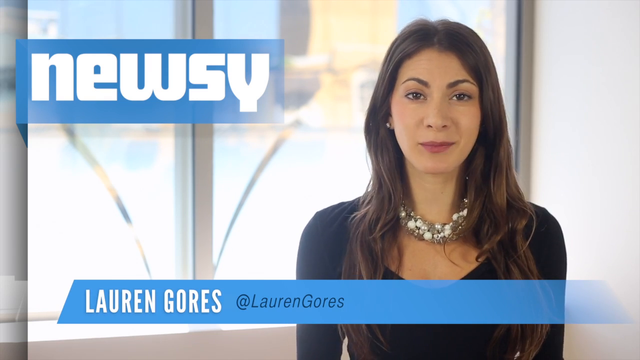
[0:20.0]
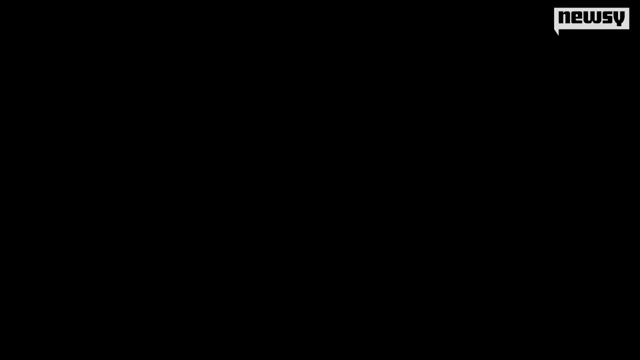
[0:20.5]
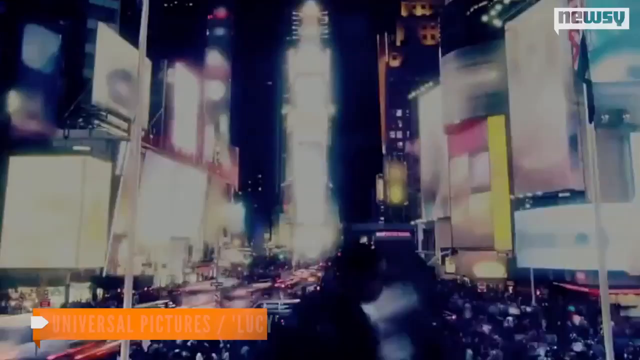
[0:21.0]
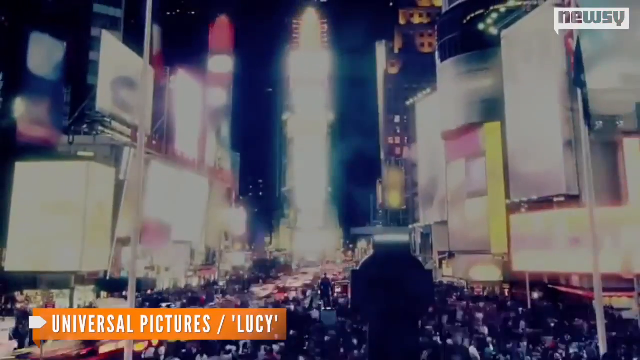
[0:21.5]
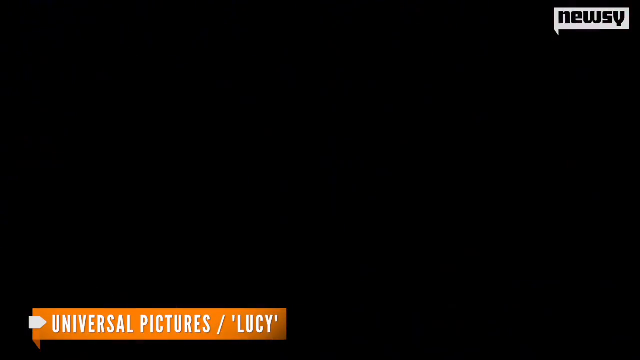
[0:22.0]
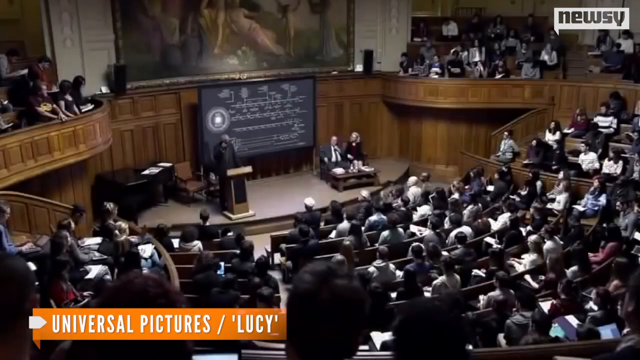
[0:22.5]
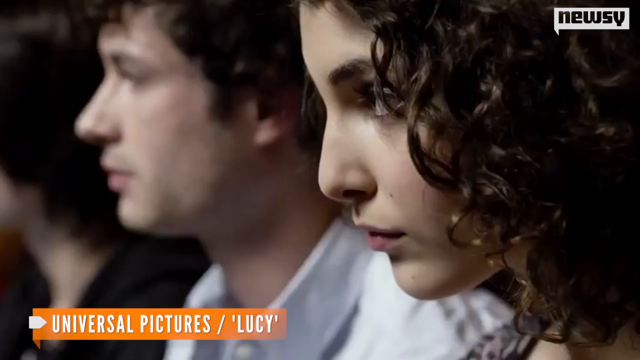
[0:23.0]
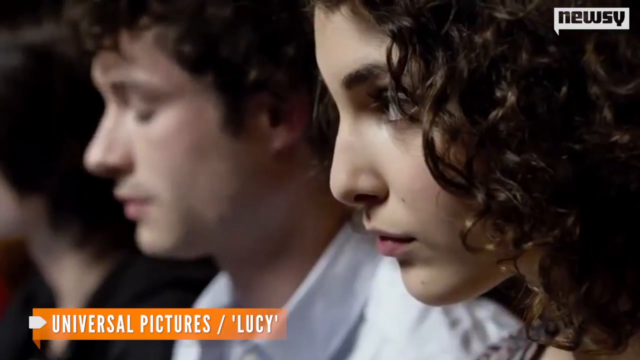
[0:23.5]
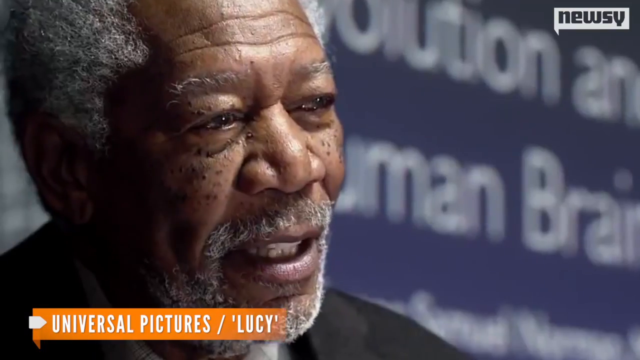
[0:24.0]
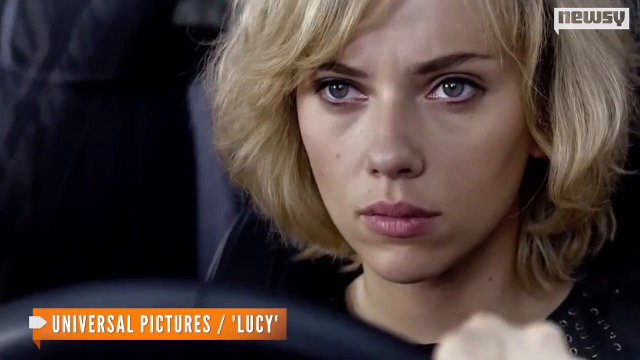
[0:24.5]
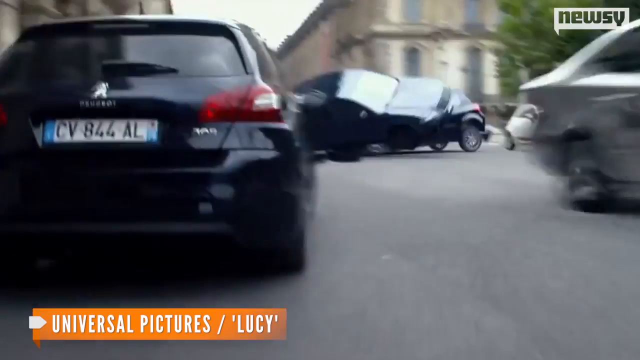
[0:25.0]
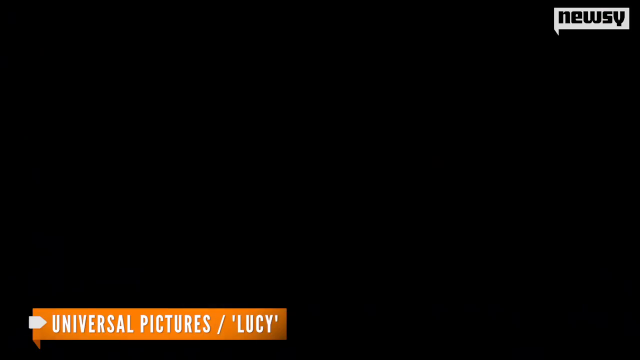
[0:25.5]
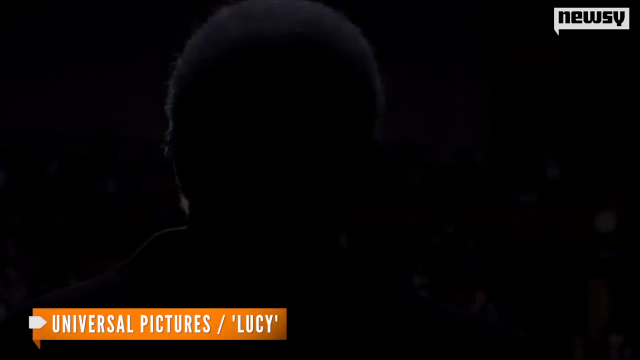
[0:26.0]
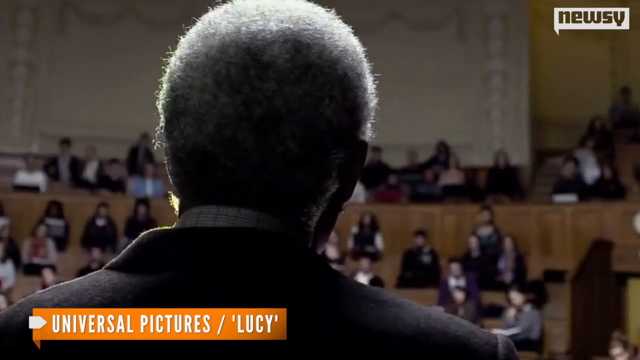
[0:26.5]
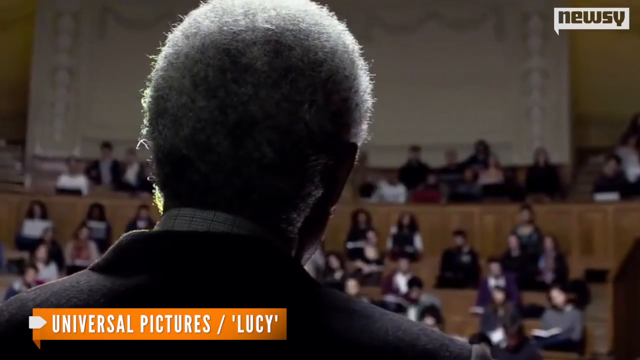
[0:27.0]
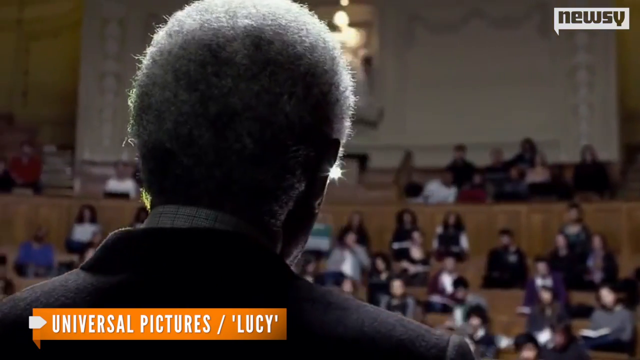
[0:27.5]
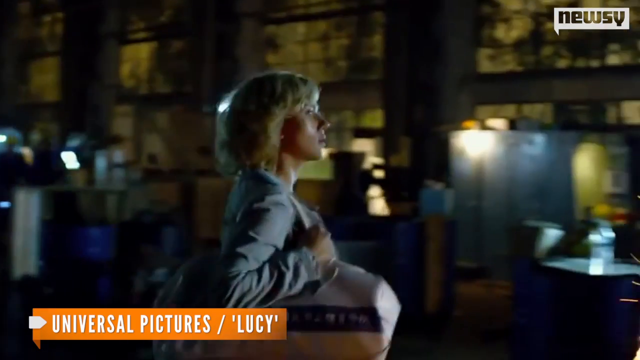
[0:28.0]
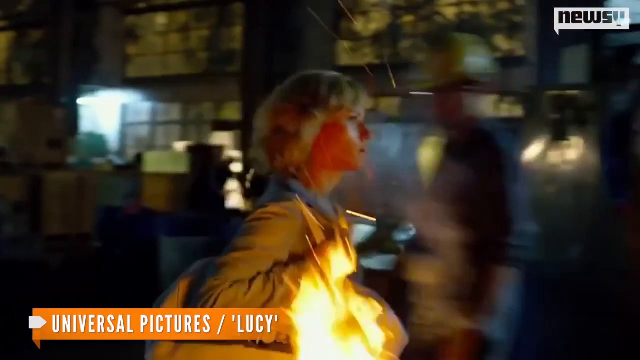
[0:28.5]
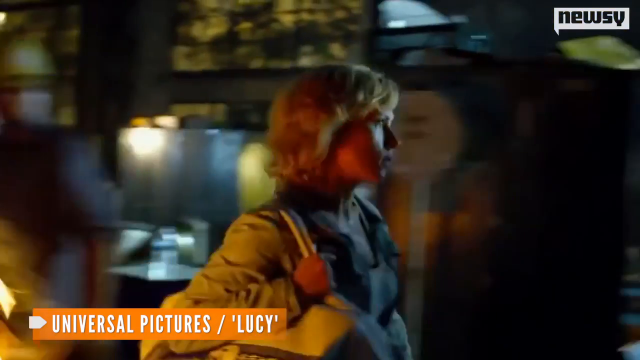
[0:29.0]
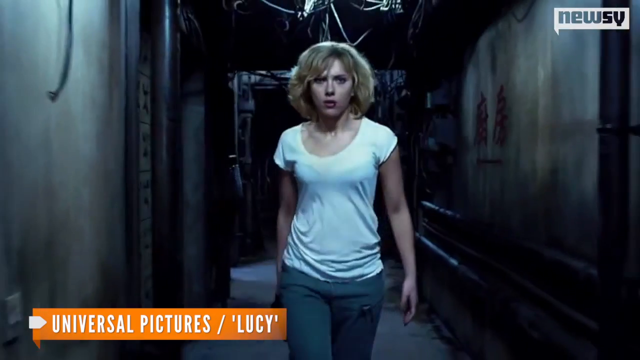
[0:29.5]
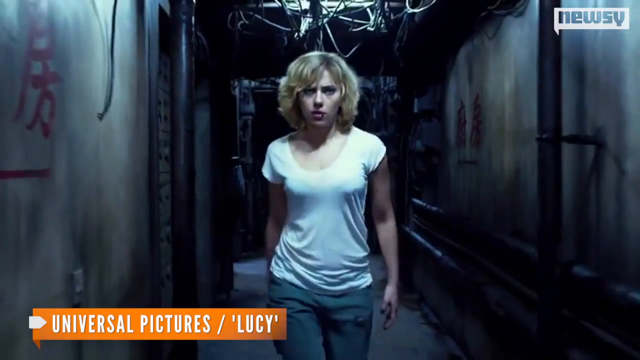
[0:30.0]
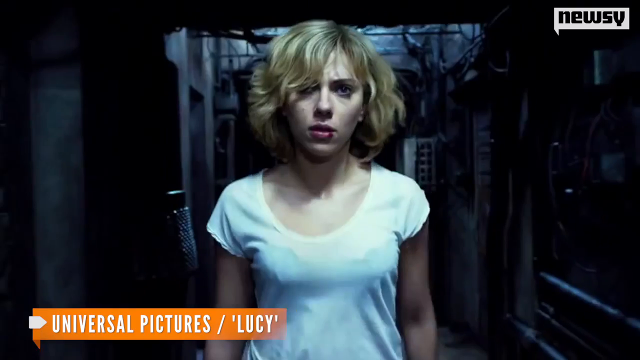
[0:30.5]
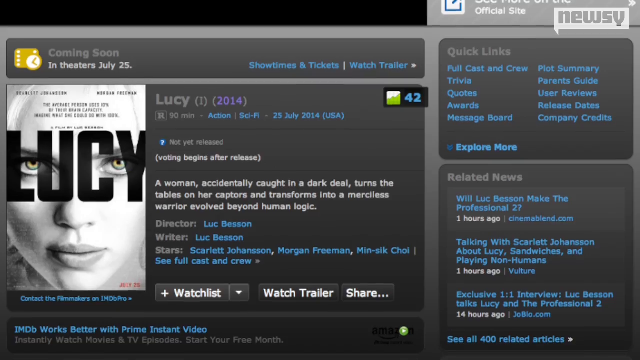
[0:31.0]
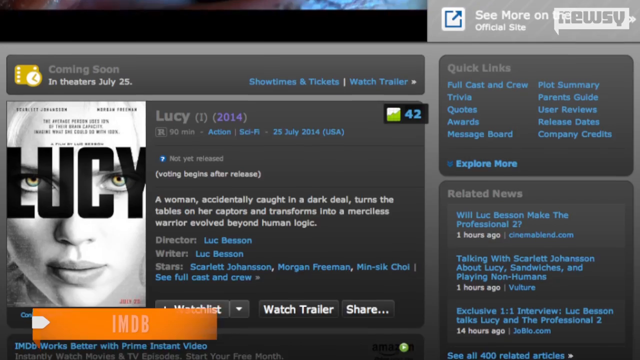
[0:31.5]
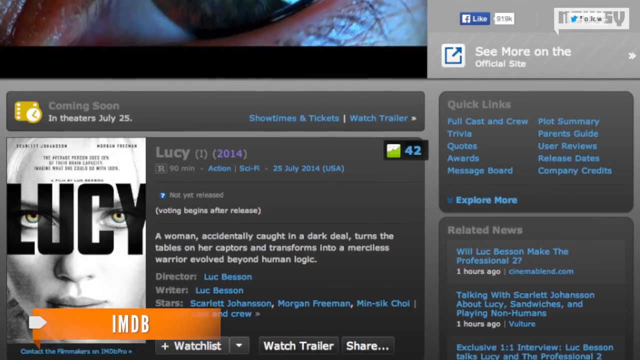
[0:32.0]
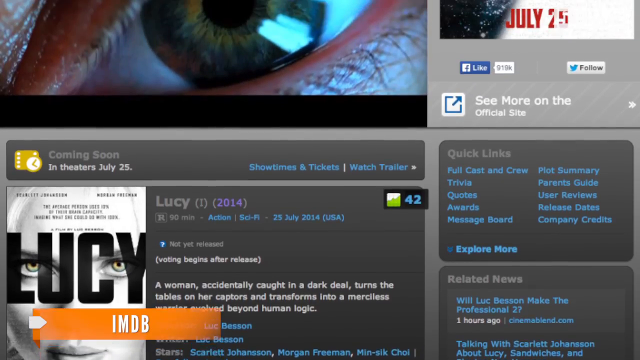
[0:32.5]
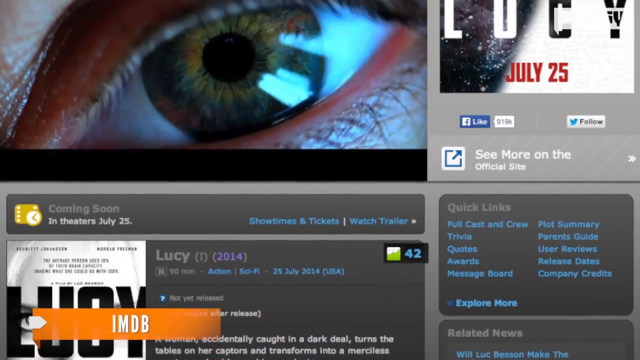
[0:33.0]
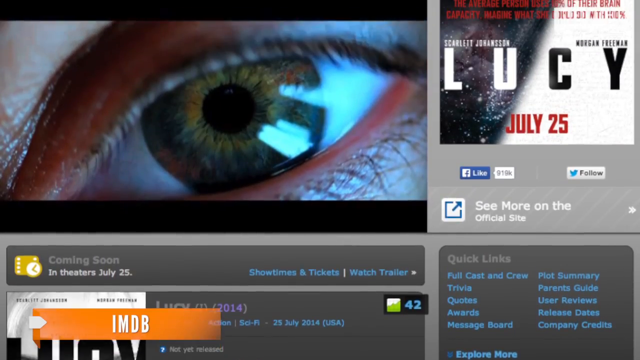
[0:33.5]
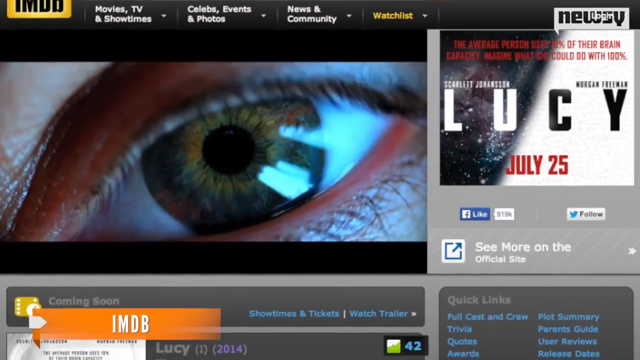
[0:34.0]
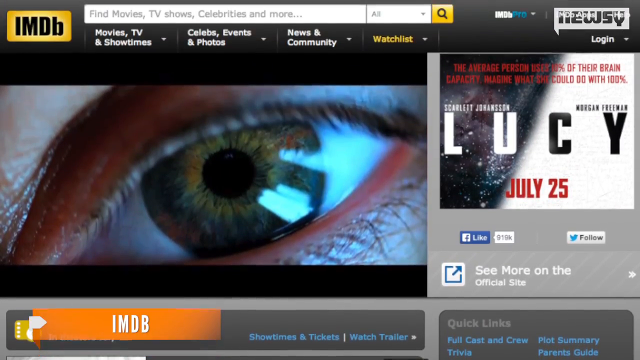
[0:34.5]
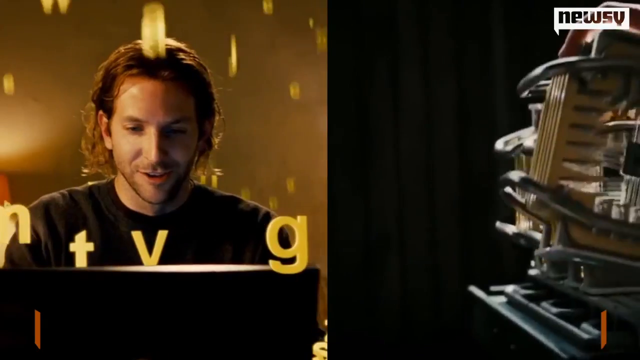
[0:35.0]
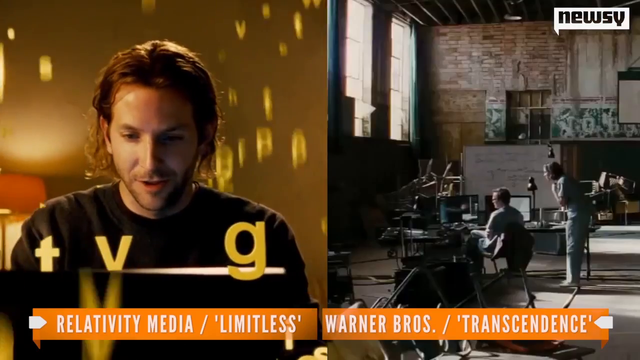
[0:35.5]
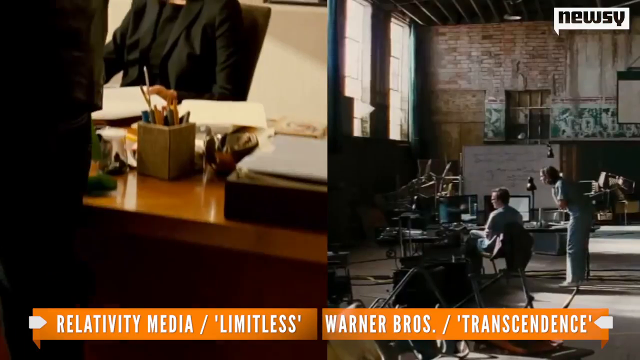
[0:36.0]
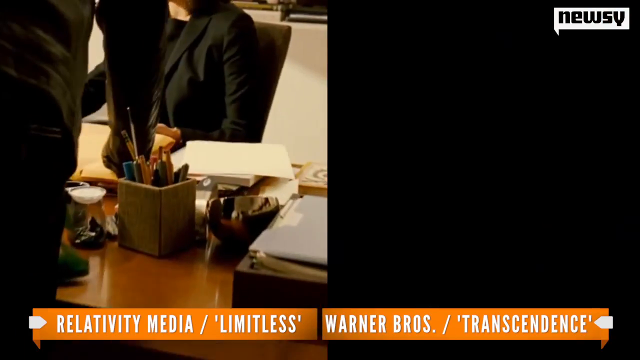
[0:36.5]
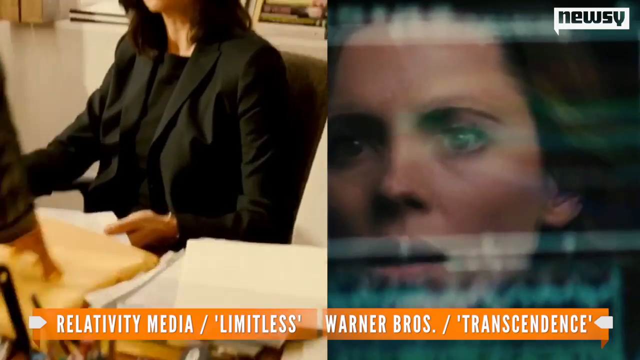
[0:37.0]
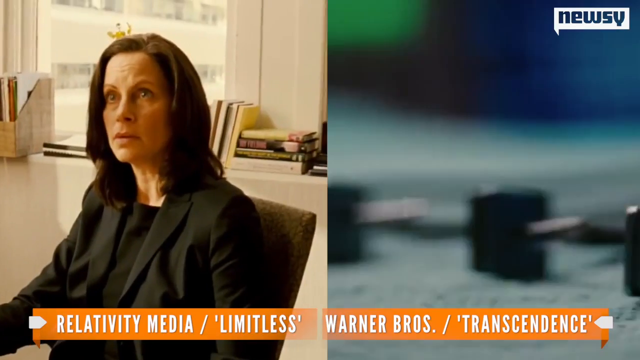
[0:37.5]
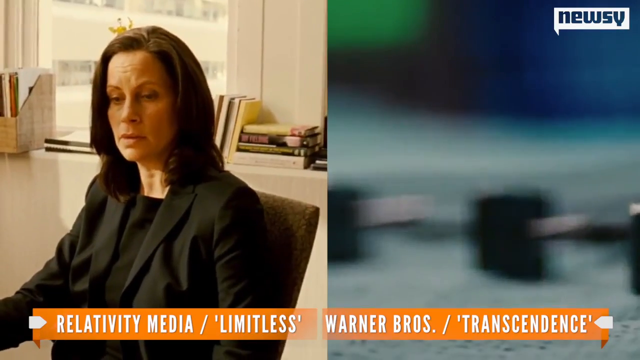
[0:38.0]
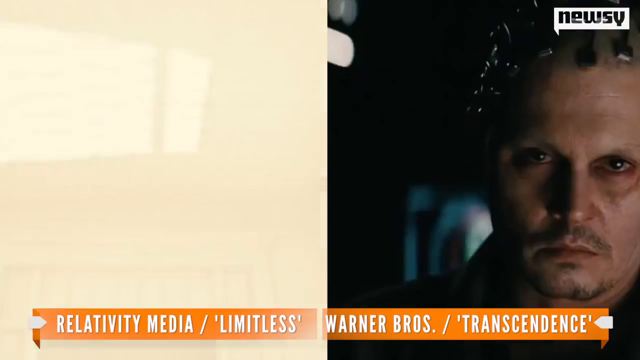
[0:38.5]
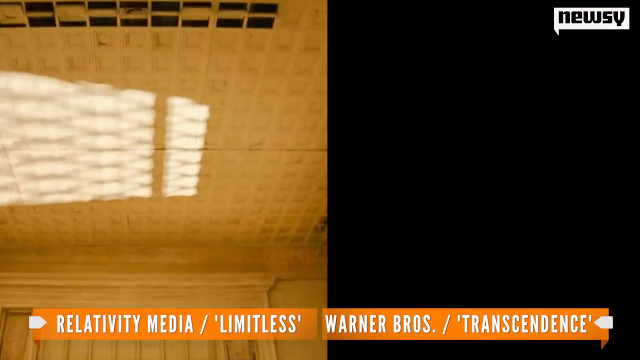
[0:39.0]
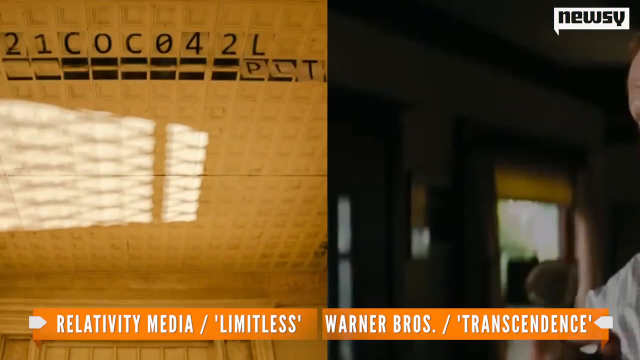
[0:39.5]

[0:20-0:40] The words "newsy science" appear in the center of the screen in block black text, with what looks like a shred of DNA twirling behind them in blue against a white background. An image of a skeleton facing right follows, with the brain outlined. "Getty Images" appears in the lower left corner in white text against an orange banner. A circle appears with a pie shape and the number 10% on the right side, and a Newsy logo is in the upper right corner. A few pages of information, all having to do with science, pop up from left to right: first Scientific America, then NBC News, then BBC, and then Live Science, whose front cover reads "Do we really only use 10% of our brain?"